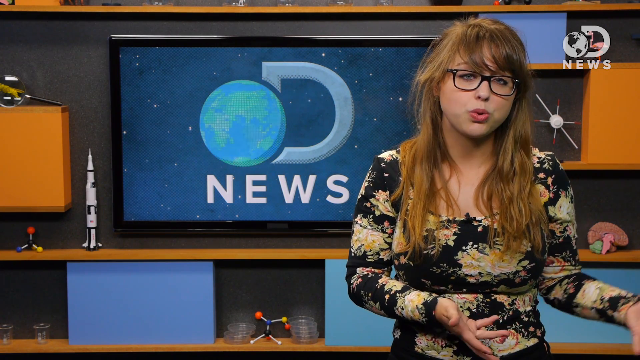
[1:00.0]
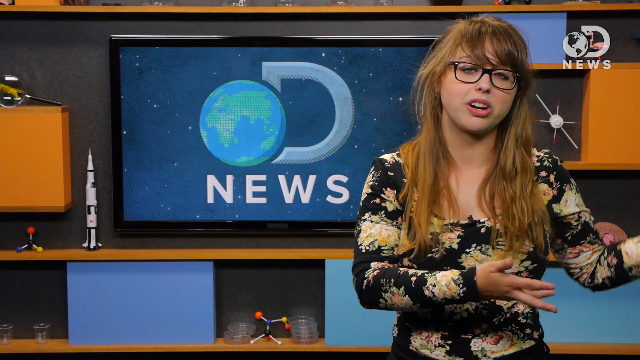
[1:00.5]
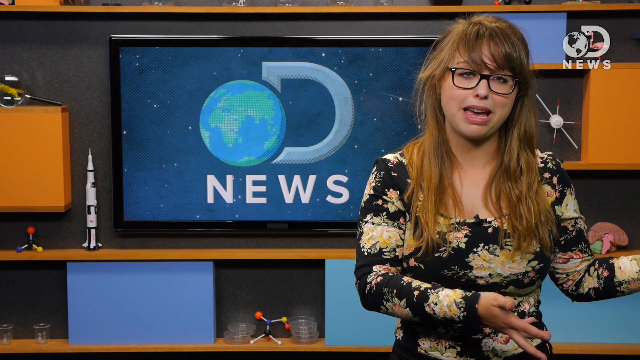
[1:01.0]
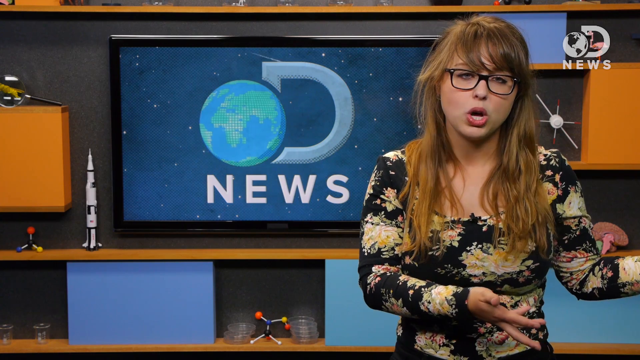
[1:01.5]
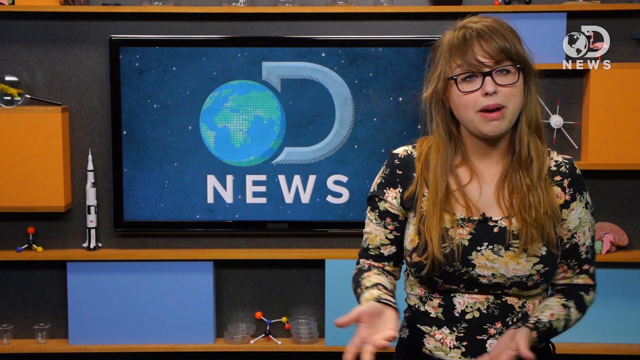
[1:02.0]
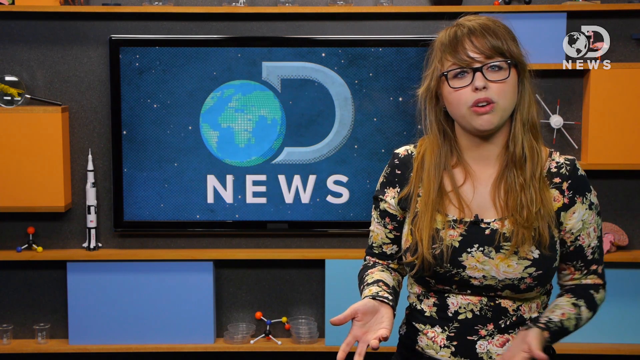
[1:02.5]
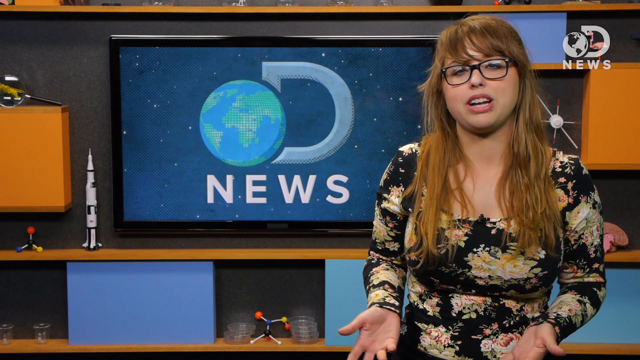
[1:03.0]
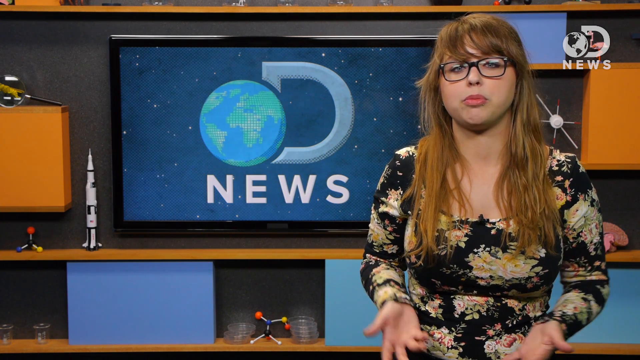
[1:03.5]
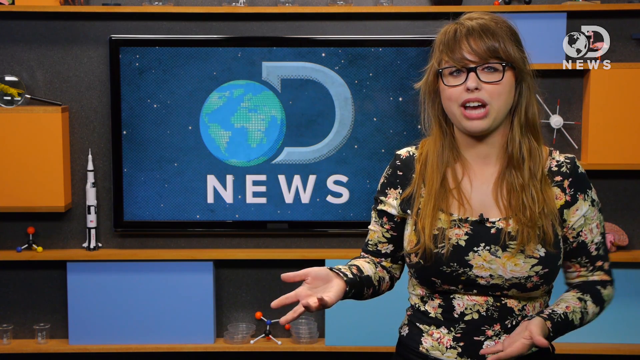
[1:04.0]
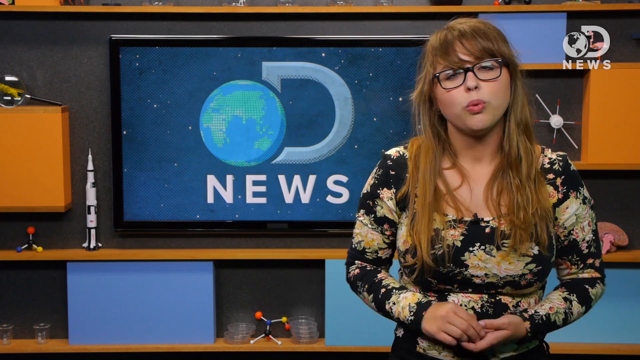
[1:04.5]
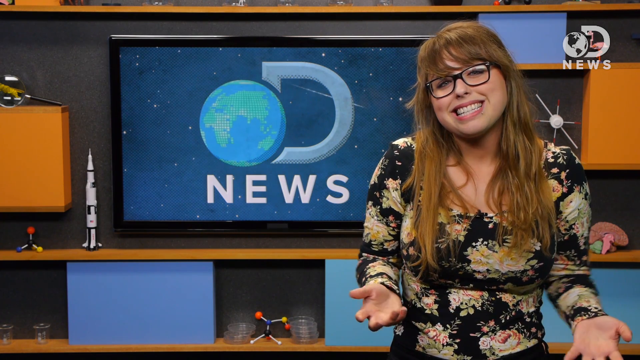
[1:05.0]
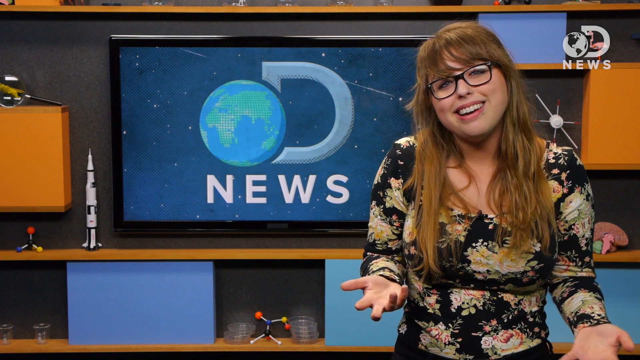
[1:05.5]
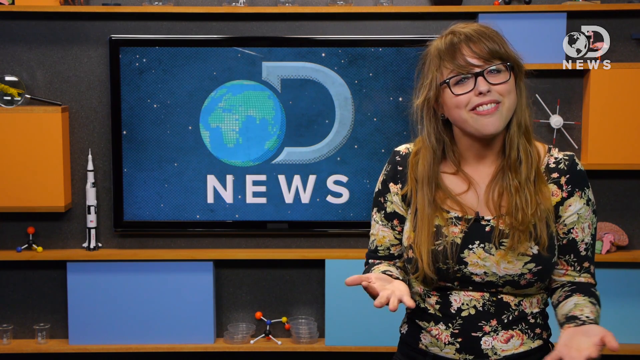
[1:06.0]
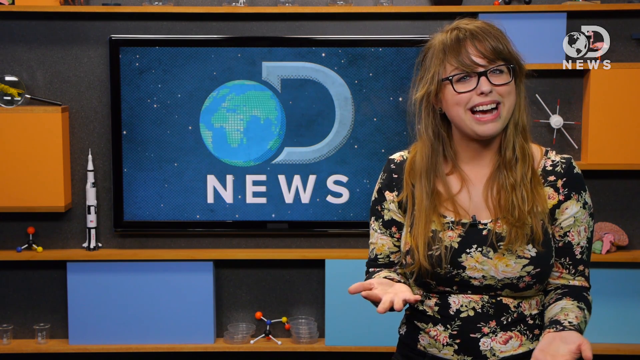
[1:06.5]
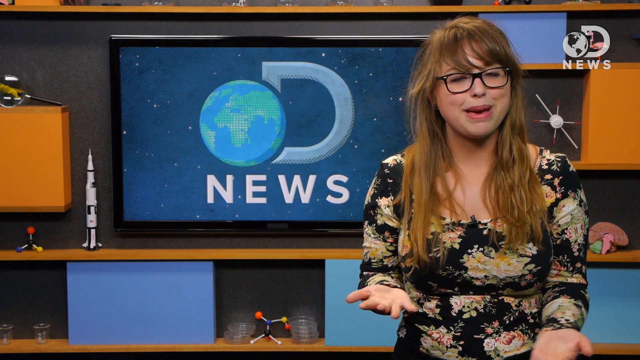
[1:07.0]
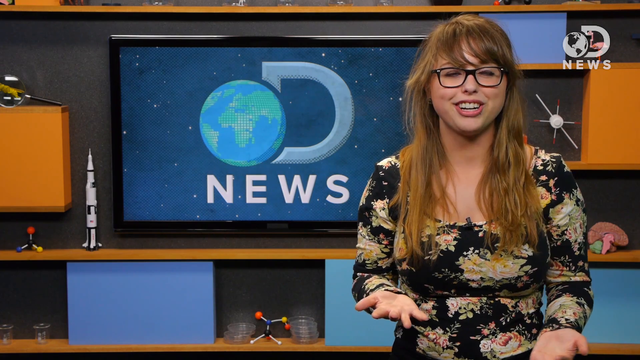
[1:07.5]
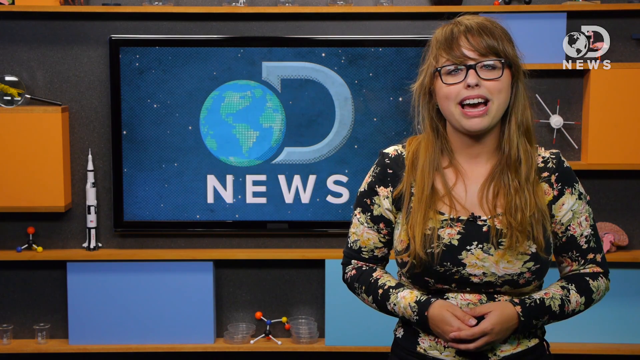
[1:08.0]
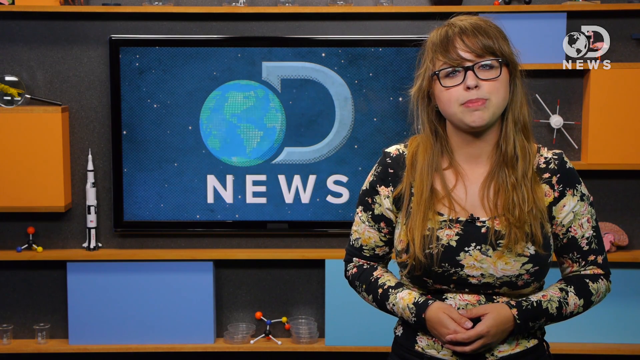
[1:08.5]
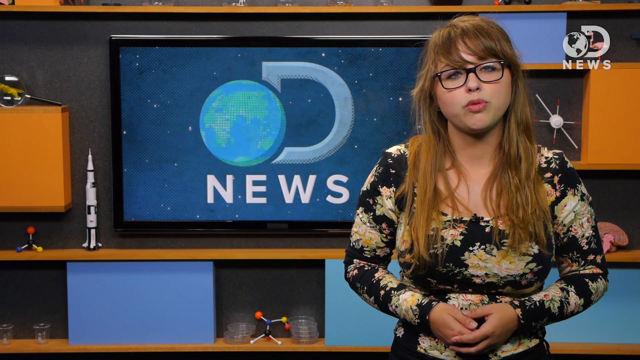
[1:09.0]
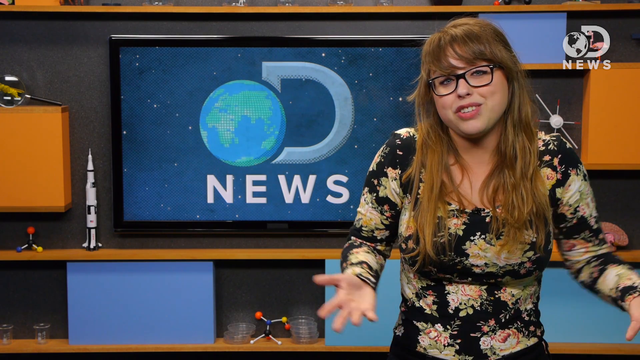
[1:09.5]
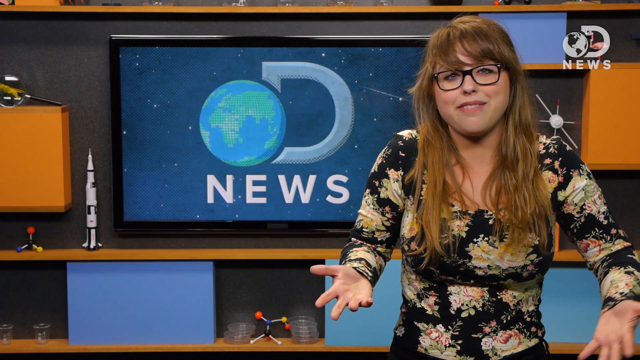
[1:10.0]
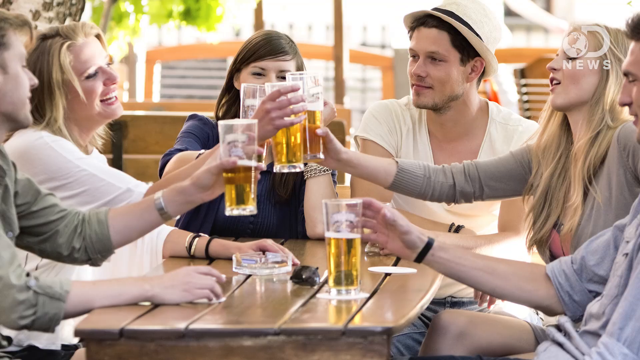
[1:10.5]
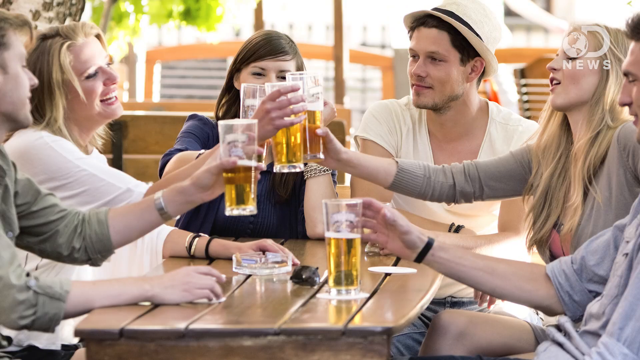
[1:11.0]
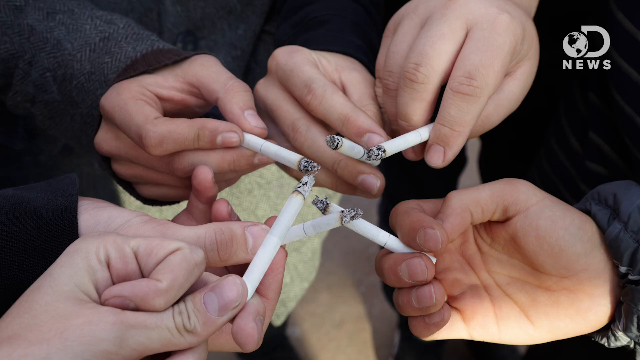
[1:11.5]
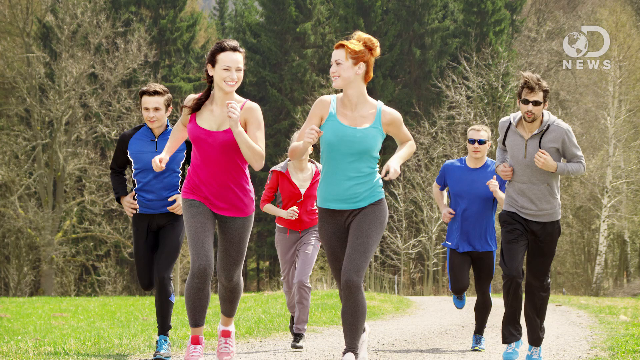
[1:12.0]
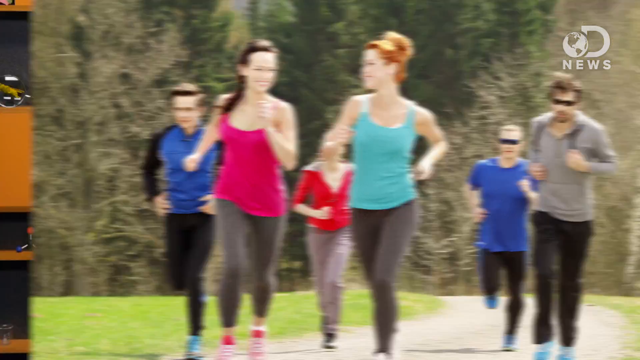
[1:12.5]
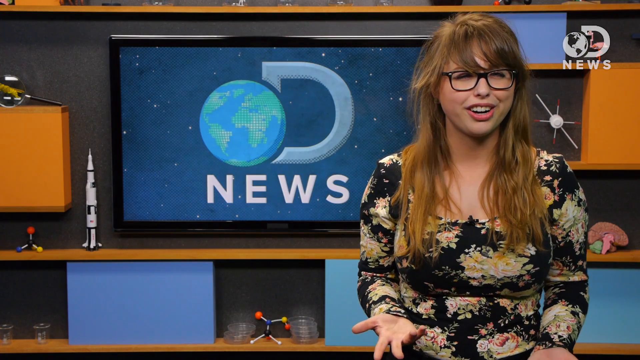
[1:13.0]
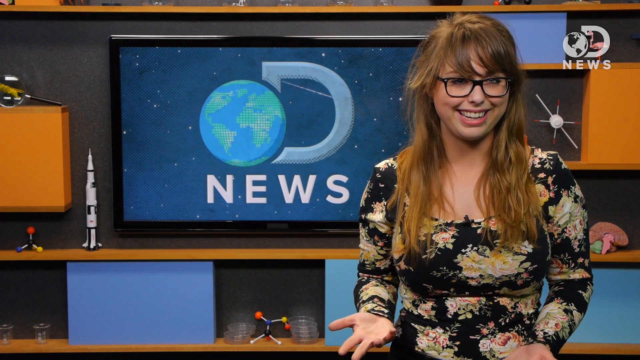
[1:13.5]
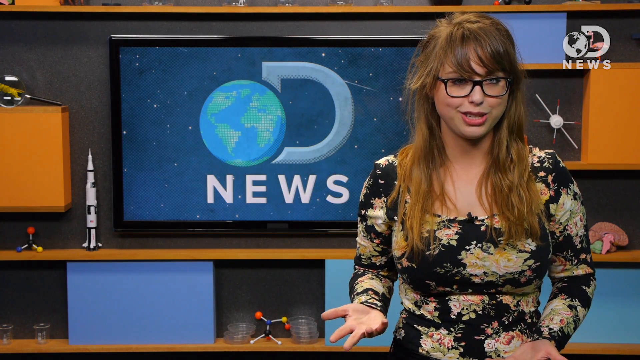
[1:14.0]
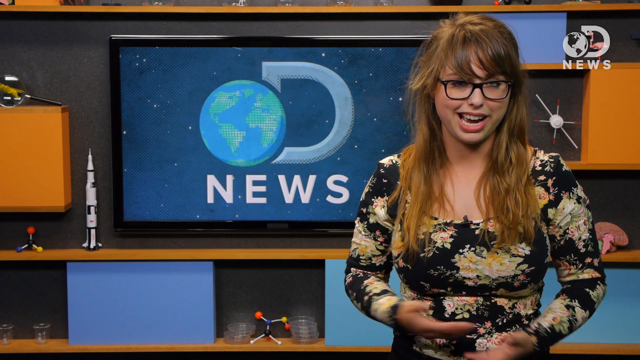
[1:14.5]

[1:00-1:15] The same woman talks to the camera. She has a white skin tone, black glasses and orange-brownish hair down to her chest, and wears a black dress with flowers that appear white and yellowish. She makes a lot of hand motions in front of her, with a television behind her, and appears very talkative. The scene switches to a group of people sitting at a bench, apparently six people, three of them on the left. On the very left is a man in a short-sleeve, sort of light green shirt, with a watch on his left hand, holding a glass of beer in his left hand. Next to him is a white woman in a white shirt holding a beer in her right hand. To her right is a woman with brown hair in a blue shirt, also holding a beer. To her right is a man in a light brown hat and a white shirt who apparently is not holding a beer. To his right, on the right side of the video, is a blonde woman in a gray sleeved shirt with a pink undershirt. The last person, at the very bottom right, is a man with a white skin tone and a black watch on his wrist, wearing a sort of blue-grayish button-up shirt. Next is an image of a group of people's hands holding white cigarettes; the people appear to be light-skinned, potentially all white, in black clothing. Then comes an image of several people running: a man on the far left, three women to his right, and two men on the far right. The video then returns to the original woman.